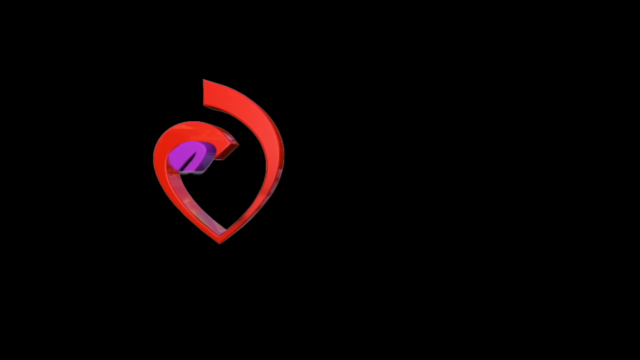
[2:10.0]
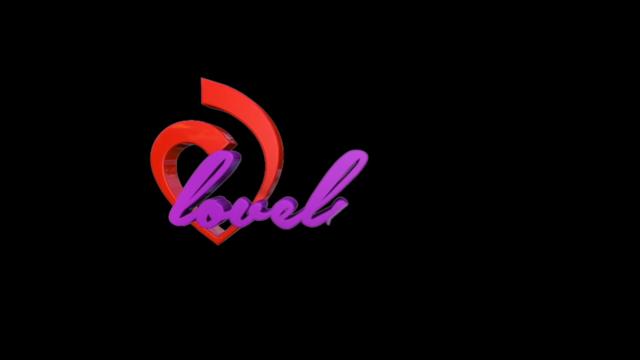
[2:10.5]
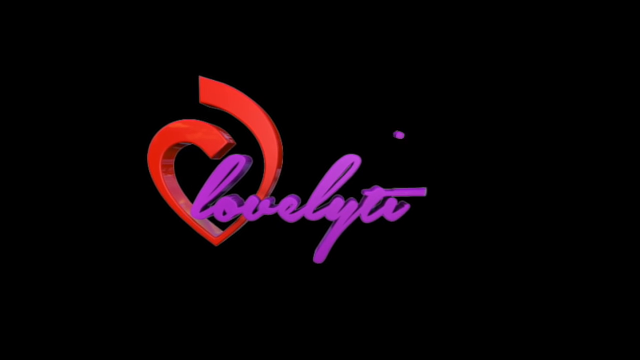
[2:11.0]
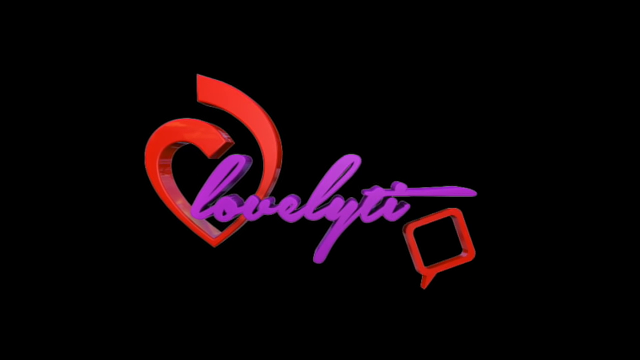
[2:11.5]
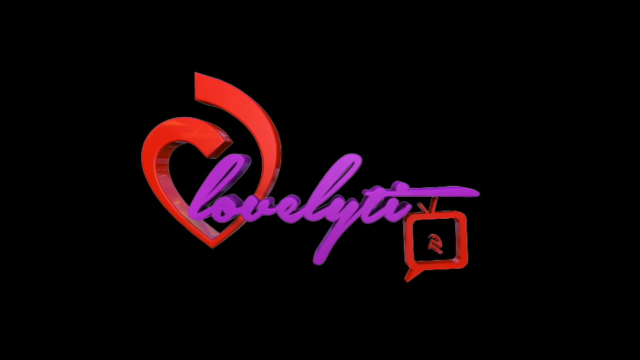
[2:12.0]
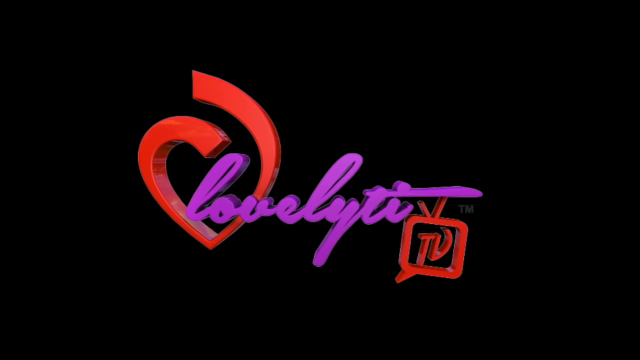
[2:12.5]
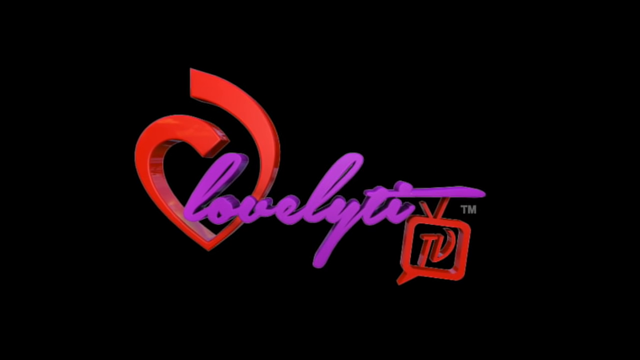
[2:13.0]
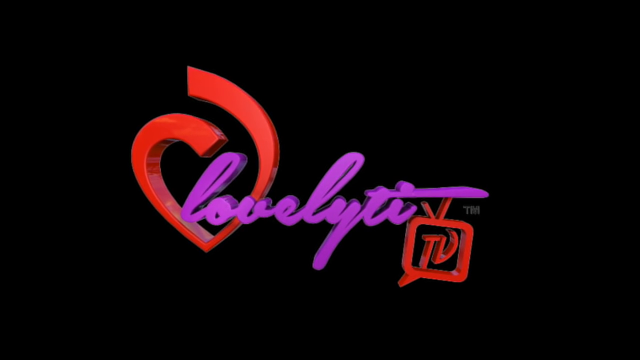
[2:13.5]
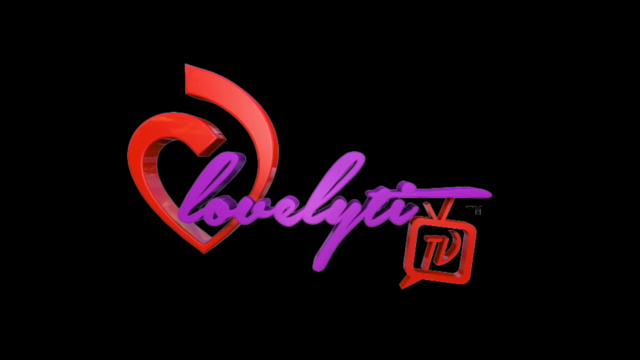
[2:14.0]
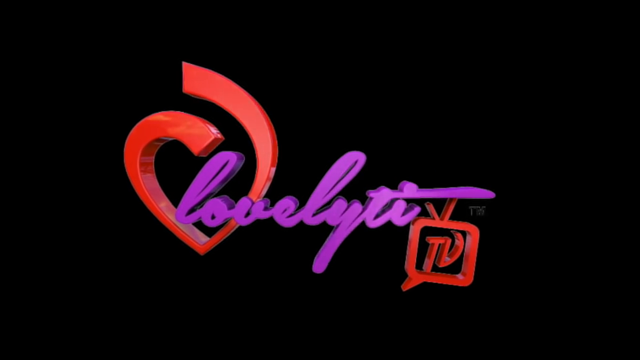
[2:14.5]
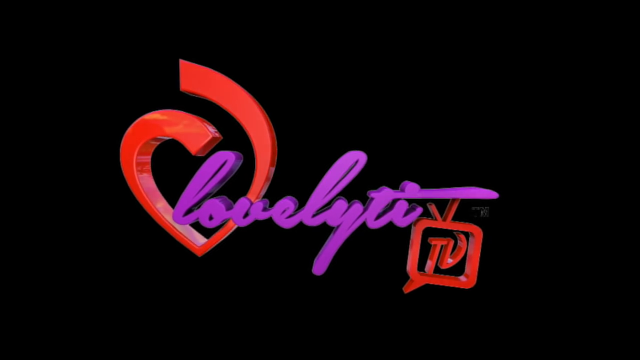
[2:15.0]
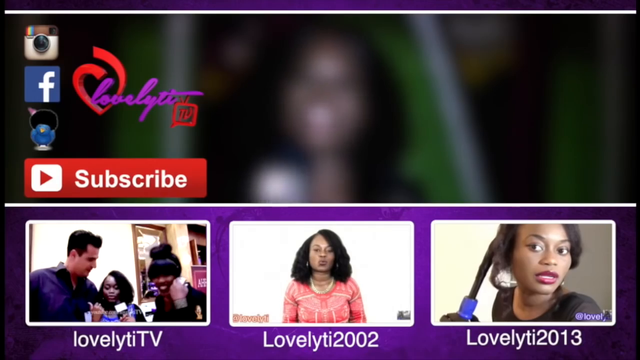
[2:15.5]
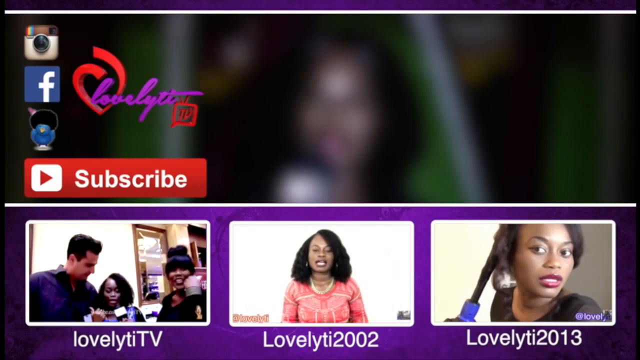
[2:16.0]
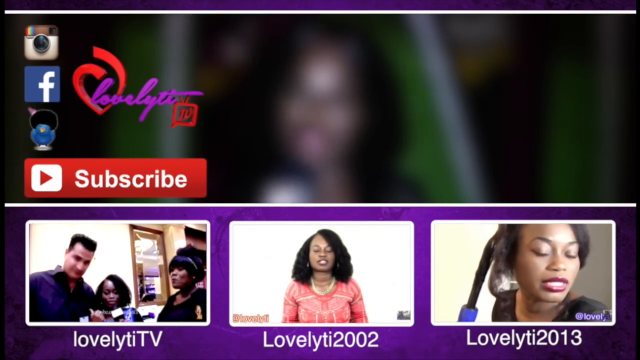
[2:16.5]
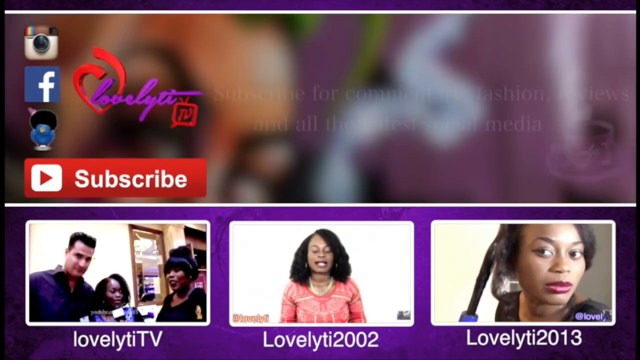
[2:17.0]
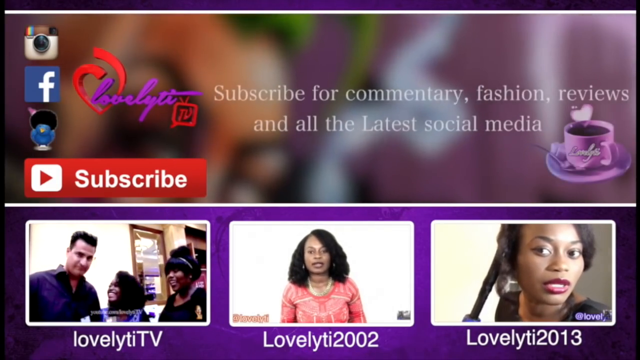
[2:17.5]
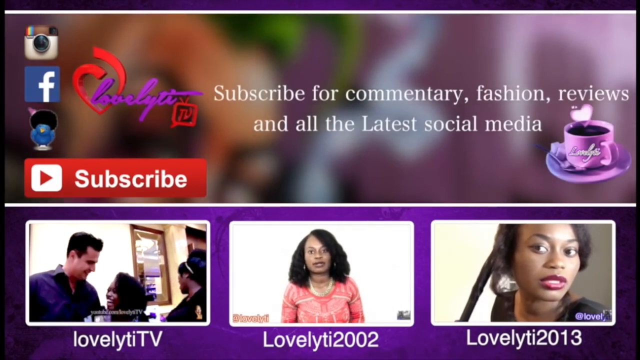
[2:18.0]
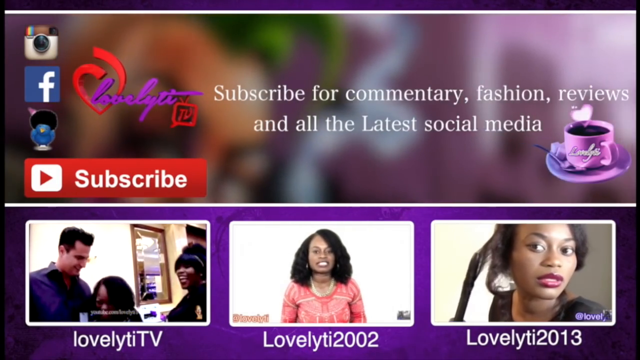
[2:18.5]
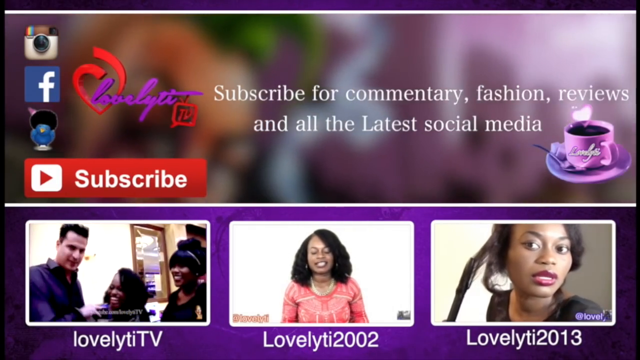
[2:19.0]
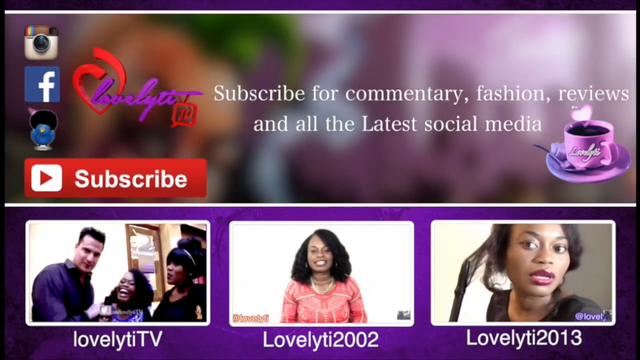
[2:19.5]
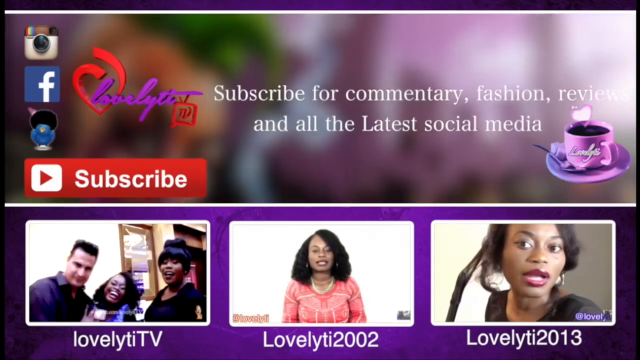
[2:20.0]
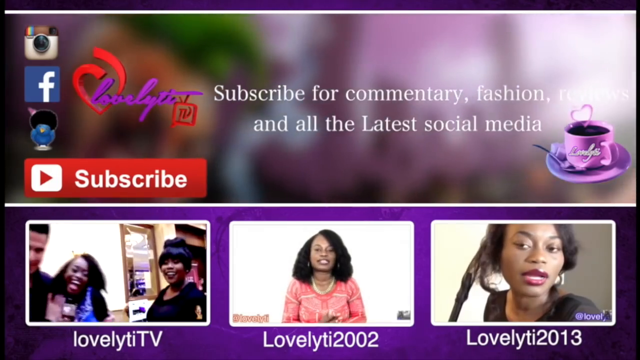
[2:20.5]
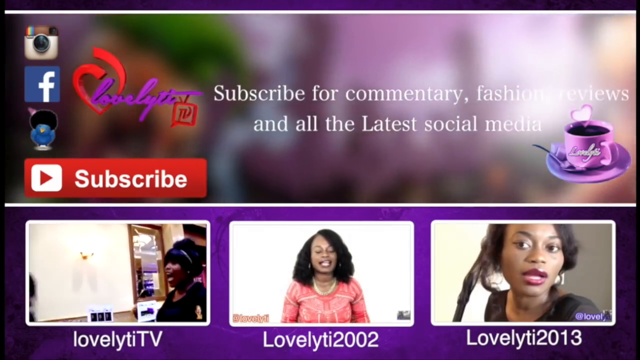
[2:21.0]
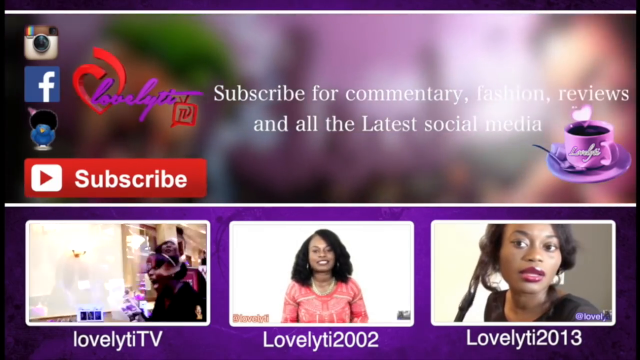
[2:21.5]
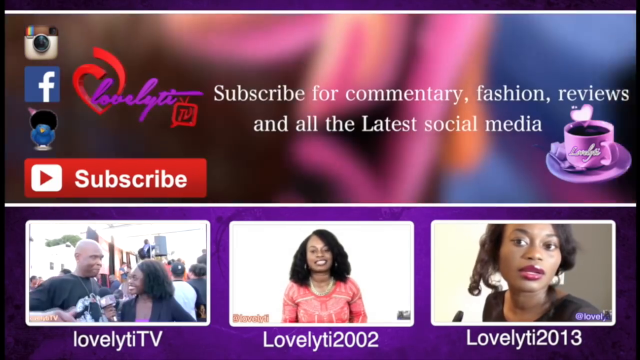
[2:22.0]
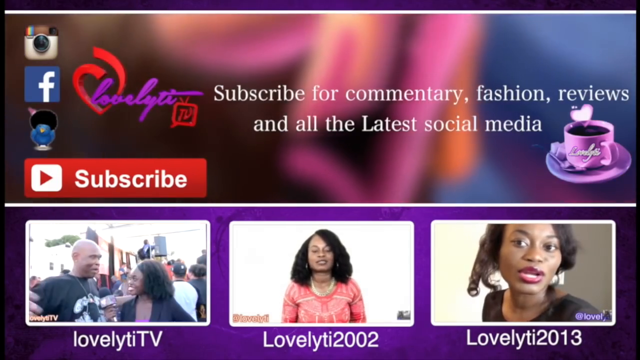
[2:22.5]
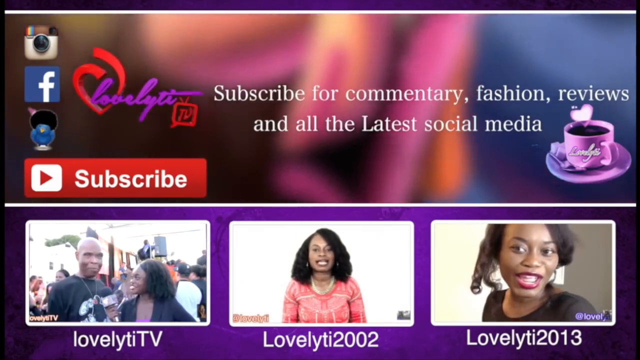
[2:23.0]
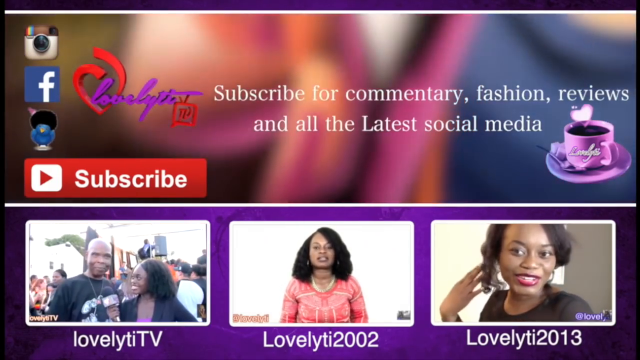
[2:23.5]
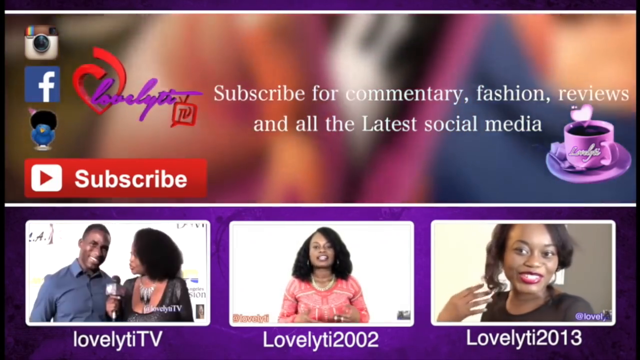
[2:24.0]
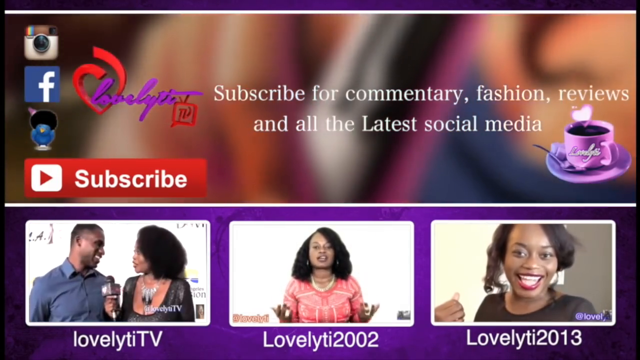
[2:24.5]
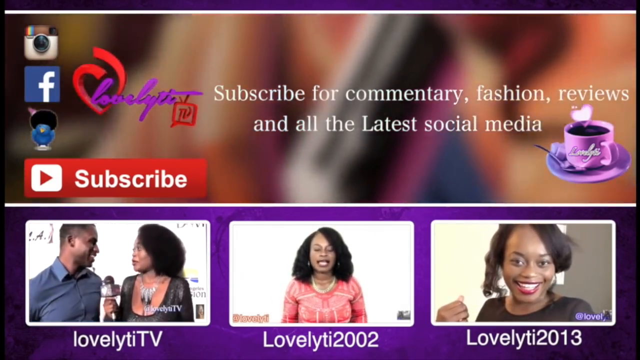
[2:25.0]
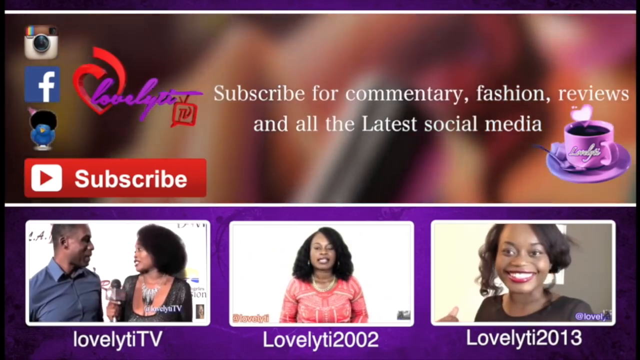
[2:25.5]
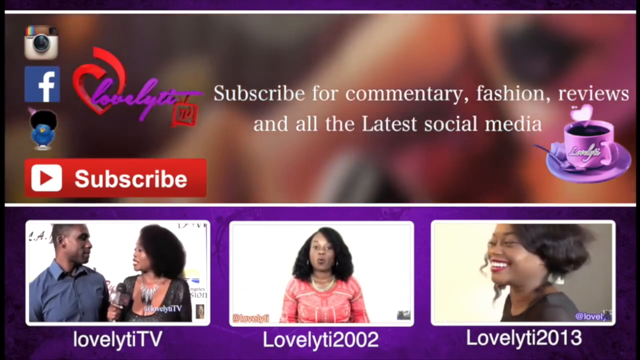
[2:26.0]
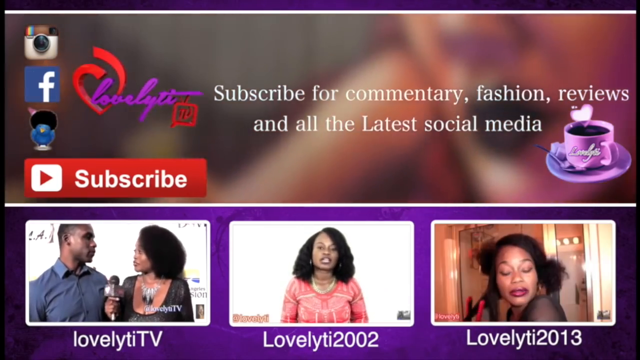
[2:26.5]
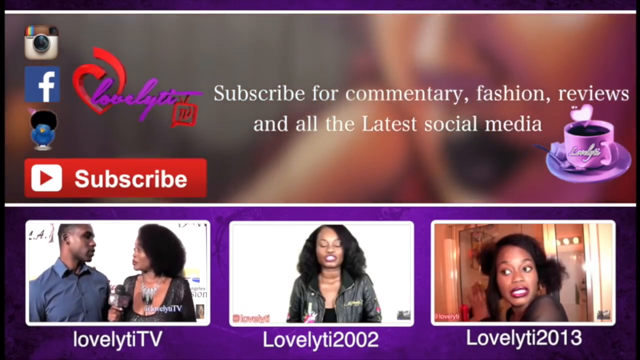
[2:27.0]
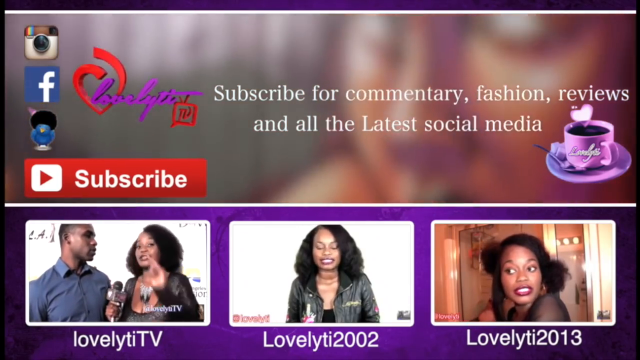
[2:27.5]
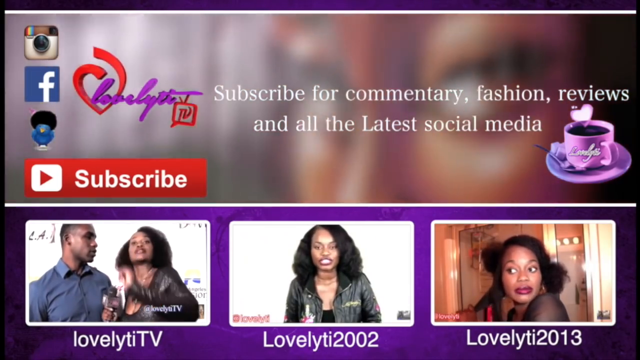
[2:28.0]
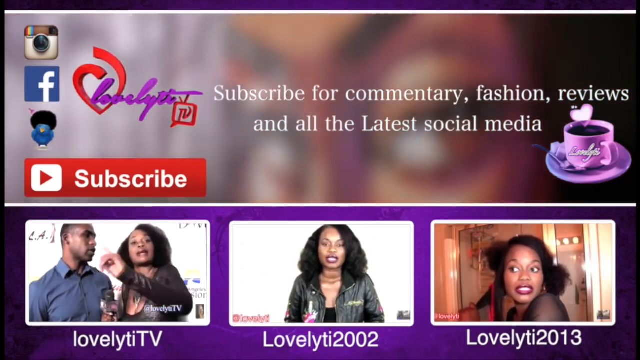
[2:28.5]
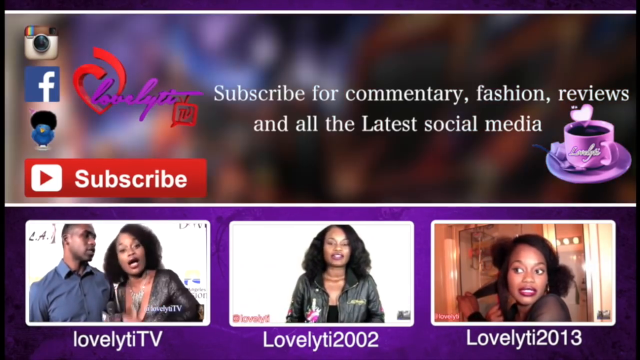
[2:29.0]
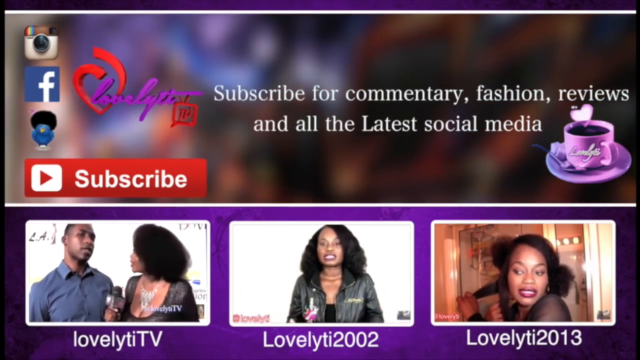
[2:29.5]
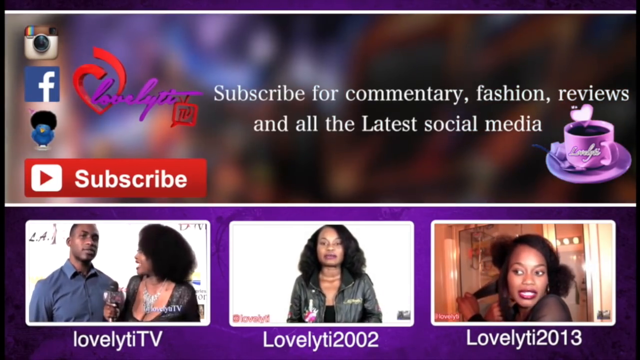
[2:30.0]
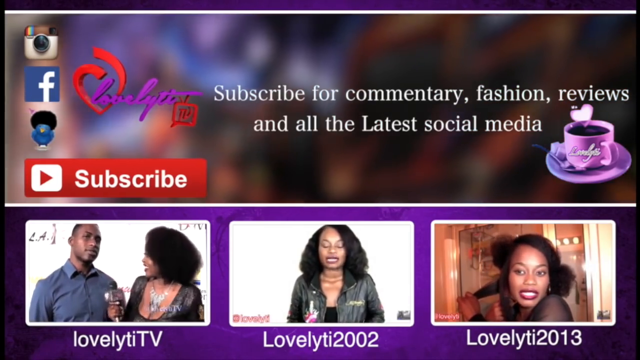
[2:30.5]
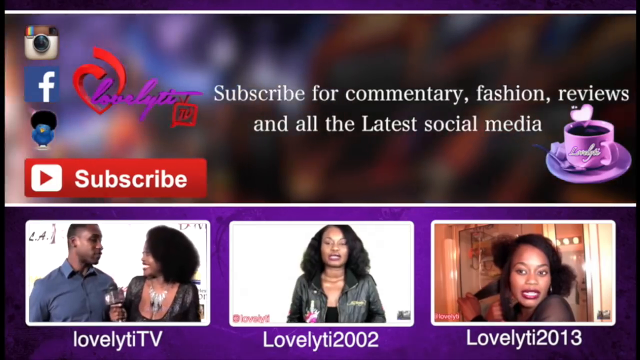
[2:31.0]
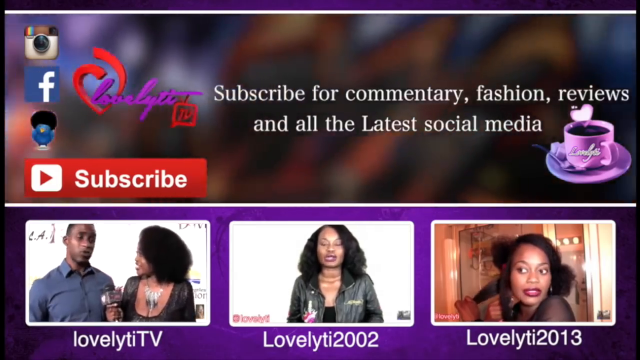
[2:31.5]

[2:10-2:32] A black background screen appears, and a ribbon forming a heart emerges onto it. It is recognizably a heart, but the two sections of the ribbon do not come together: the left side swirls around in the typical heart shape, while the right swirl loops around above it. A purple section on the left side of the heart keeps moving, and purple writing shows the words "Lovely Tea" in cursive. A red TV emerges from the bottom of the screen; it has one leg on its left side and two antennas on top forming a V, and inside its body is a black background with the capital letters "T" and "V", which move around and position themselves standing up. The video then changes to a subscribe page showing the logo: the Lovely T writing, the heart, and the red TV with "TV" written inside it. Next to this are the words "subscribe for commentary, fashion reviews and all the latest social media". To the right is a purple teacup filled with tea on a saucer, with a white heart resting on the edge of the cup. Toward the left side are an Instagram logo, a Facebook logo and a red and white YouTube subscribe button.